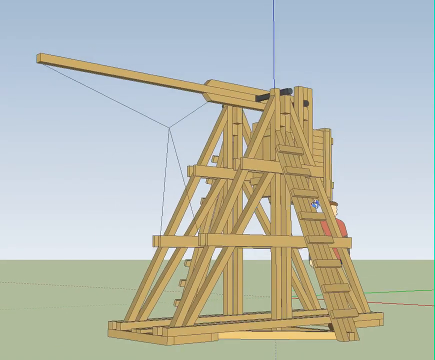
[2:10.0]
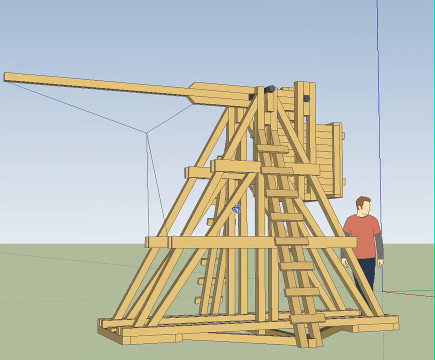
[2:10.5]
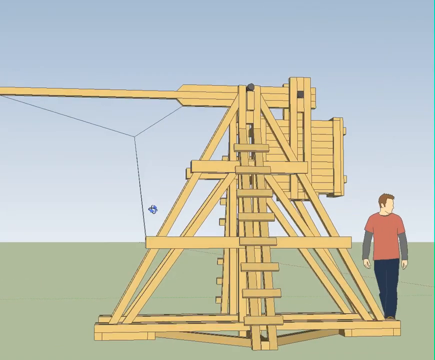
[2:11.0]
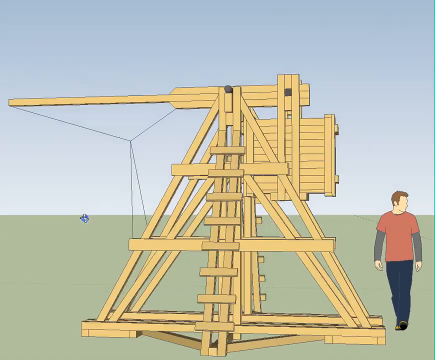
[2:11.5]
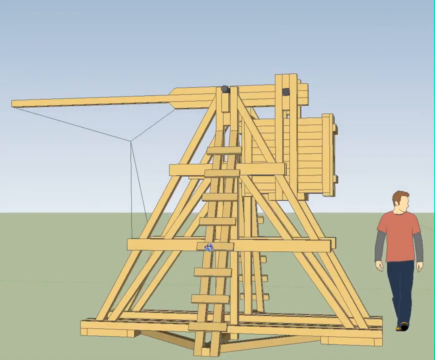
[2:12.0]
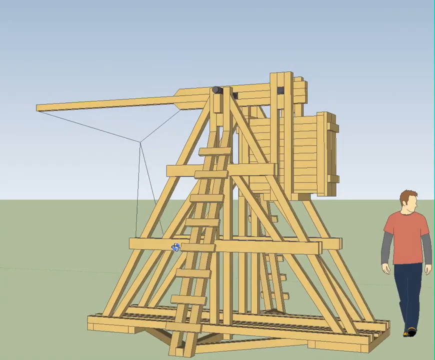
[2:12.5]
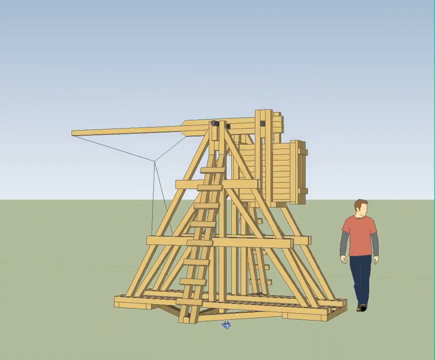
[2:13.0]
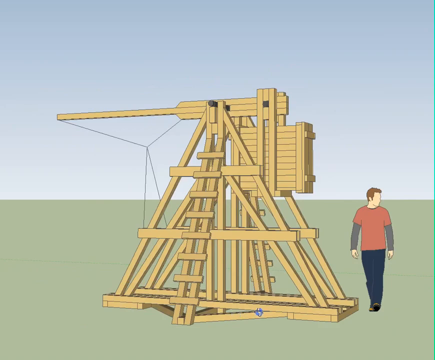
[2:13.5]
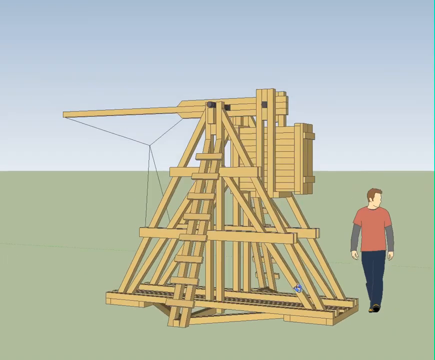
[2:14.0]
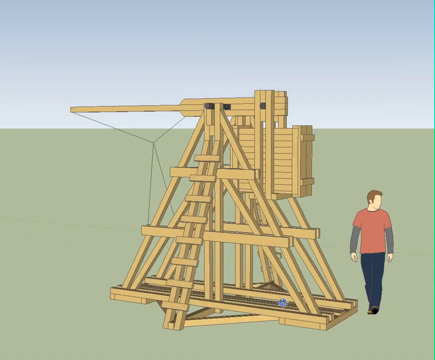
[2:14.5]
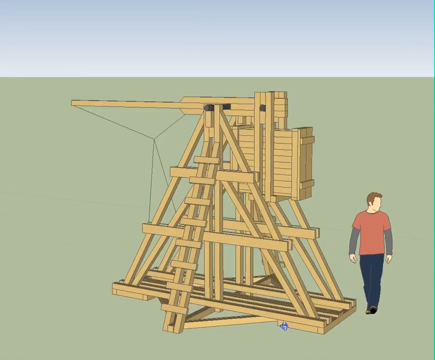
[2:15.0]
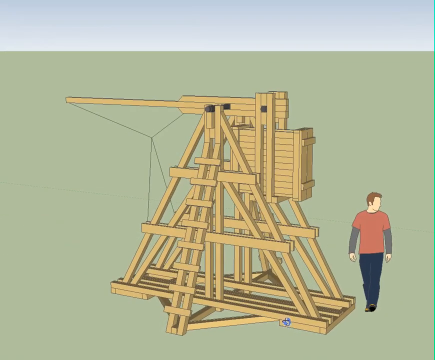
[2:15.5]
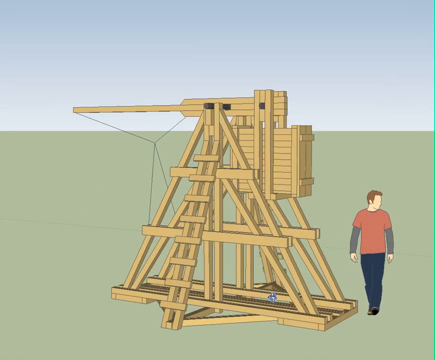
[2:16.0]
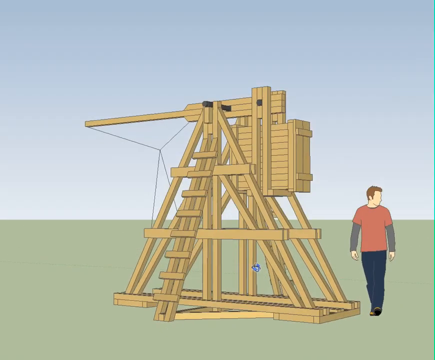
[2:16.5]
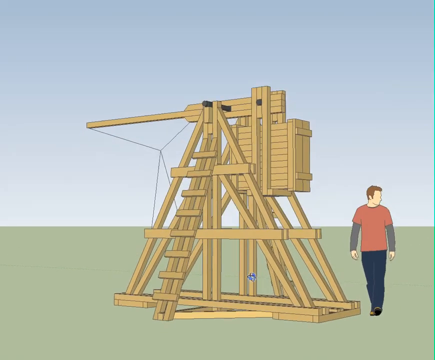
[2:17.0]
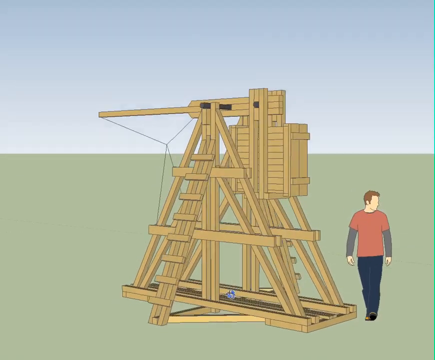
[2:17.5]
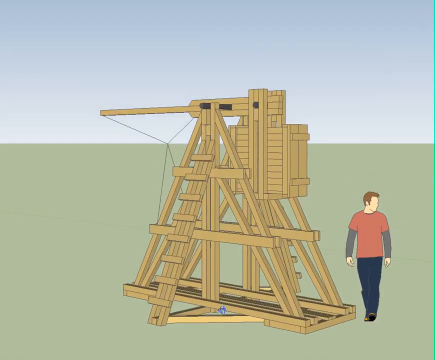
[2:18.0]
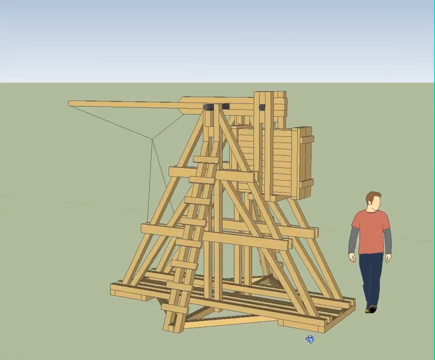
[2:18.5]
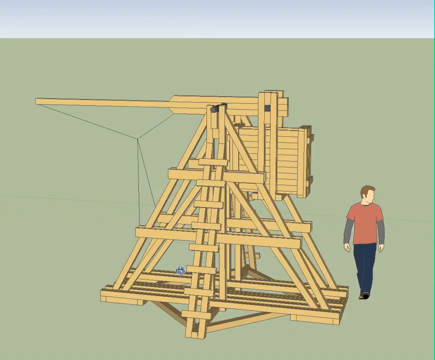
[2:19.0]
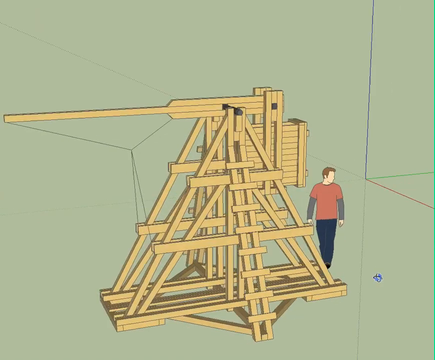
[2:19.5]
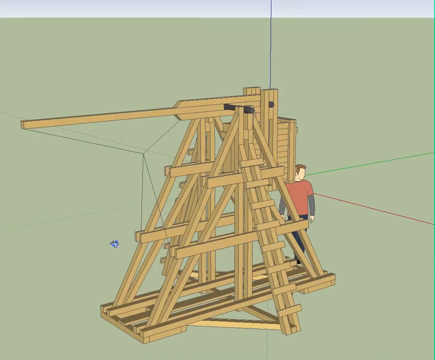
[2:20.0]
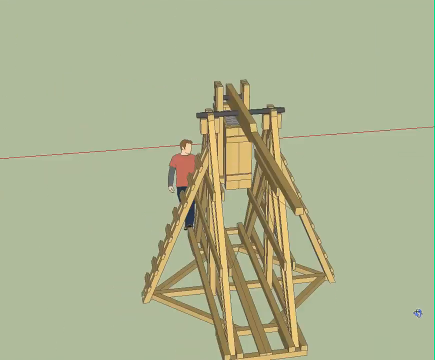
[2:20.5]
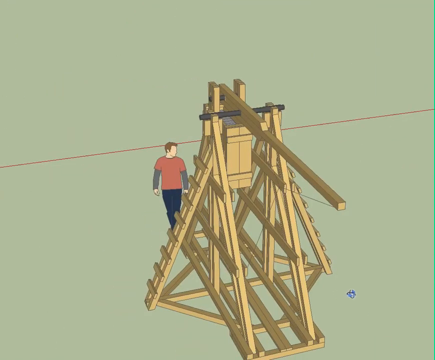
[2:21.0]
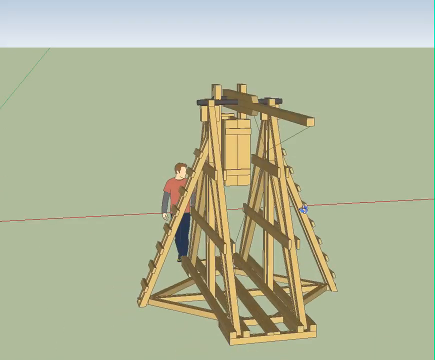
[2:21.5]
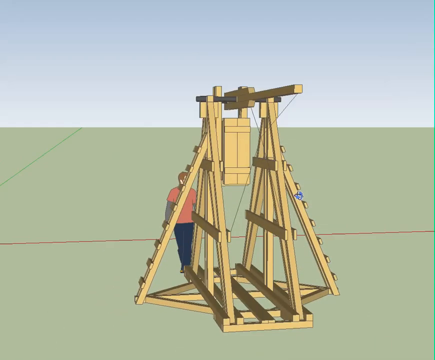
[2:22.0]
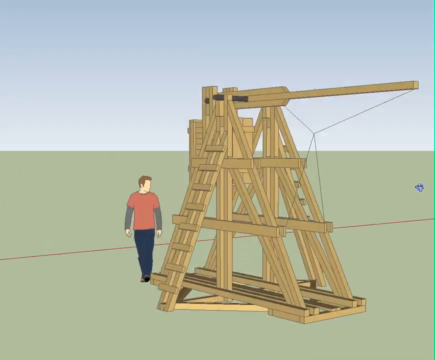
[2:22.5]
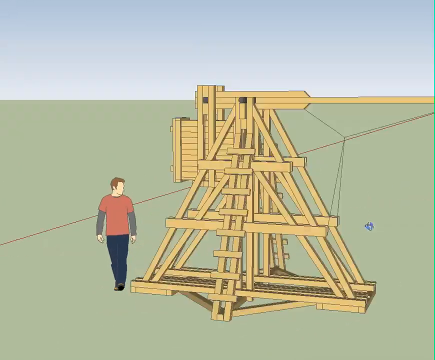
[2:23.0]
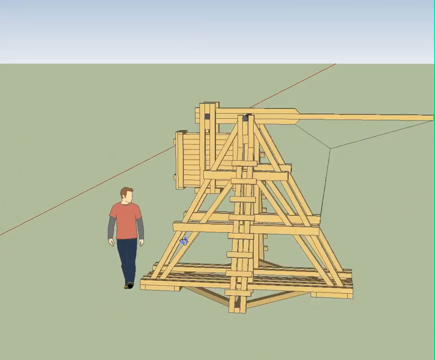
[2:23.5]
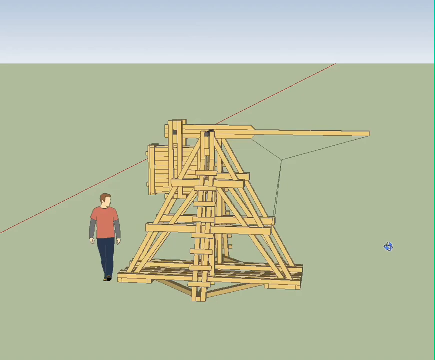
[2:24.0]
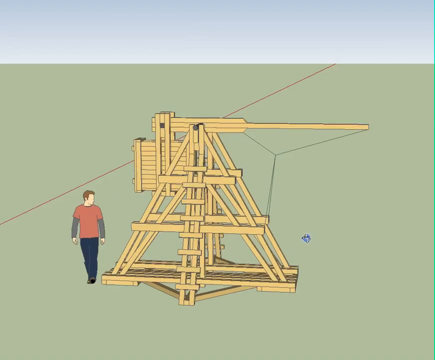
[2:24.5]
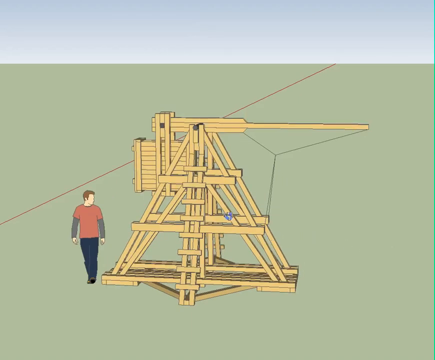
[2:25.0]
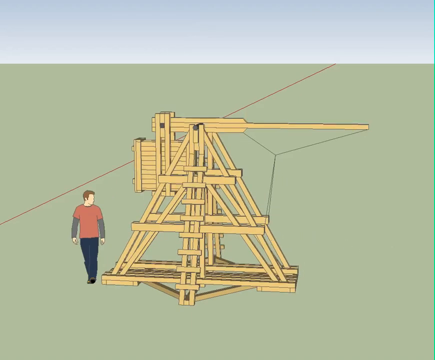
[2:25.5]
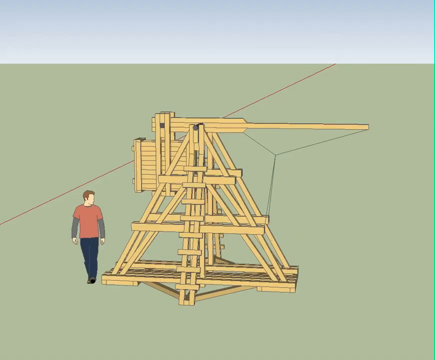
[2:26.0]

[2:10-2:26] The wooden structure is moved around to show different angles: a top view, a side view and a bottom view. It keeps turning and then stops. The platform is green like grass, the top section is sky blue, and a red line goes across. The structure keeps turning, and the cursor touches the middle part, the back part, the middle again, the back again, then the front, the center part and the back.